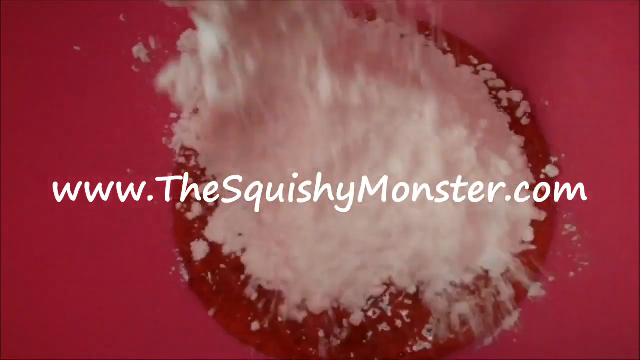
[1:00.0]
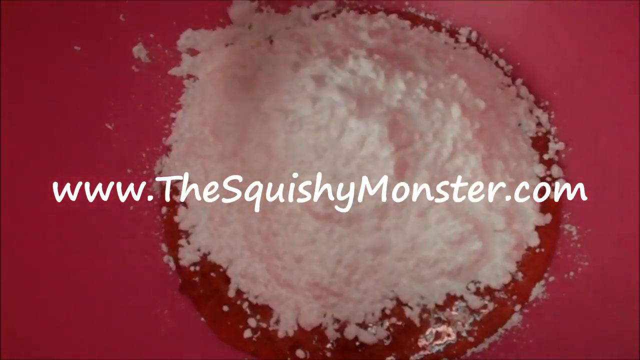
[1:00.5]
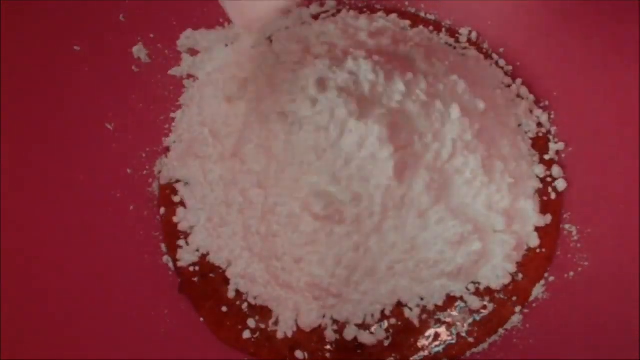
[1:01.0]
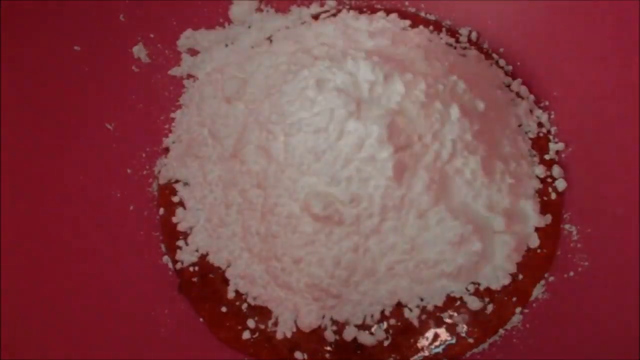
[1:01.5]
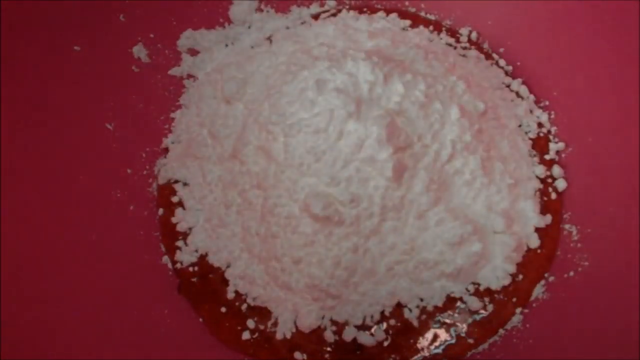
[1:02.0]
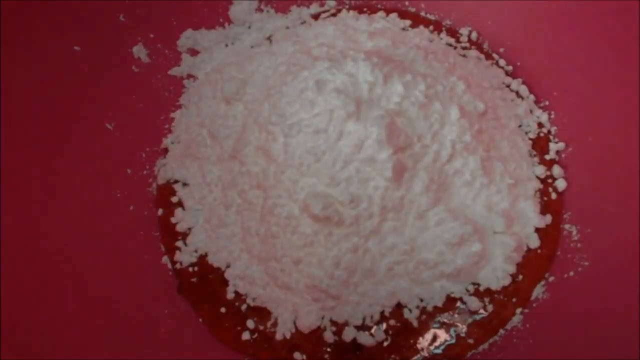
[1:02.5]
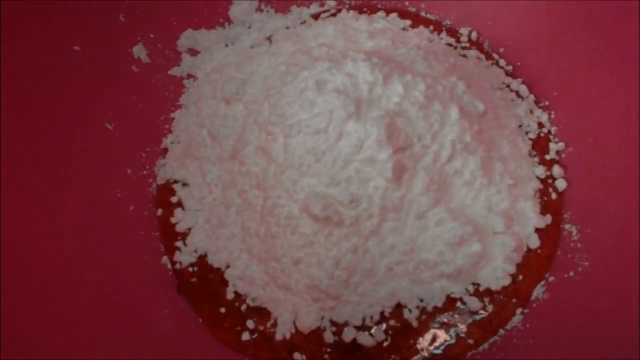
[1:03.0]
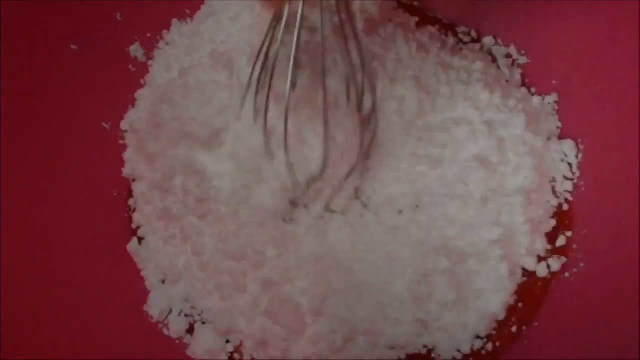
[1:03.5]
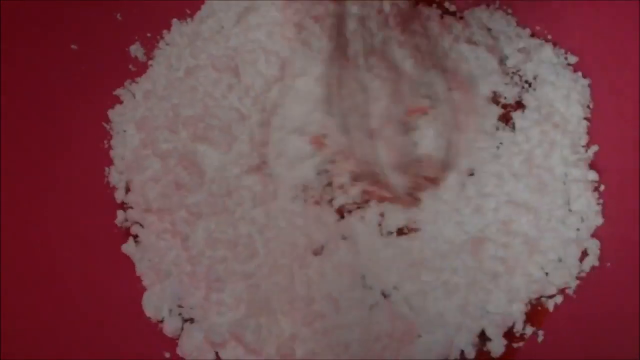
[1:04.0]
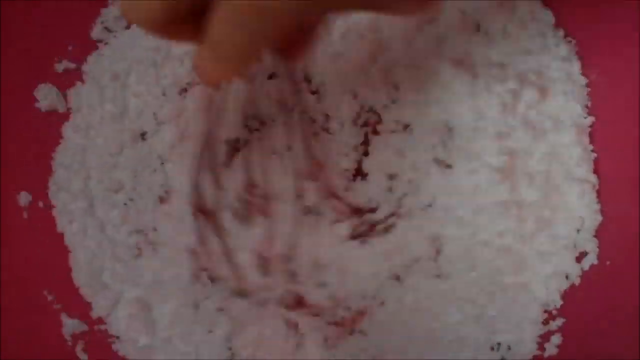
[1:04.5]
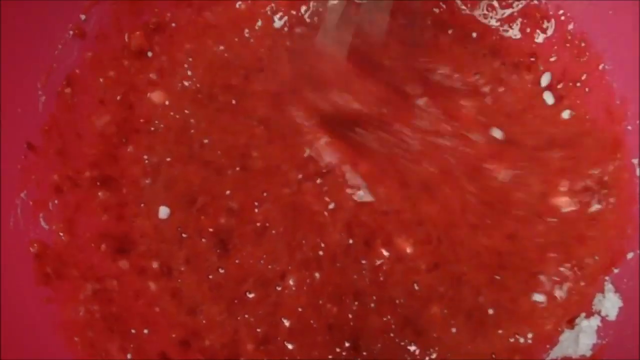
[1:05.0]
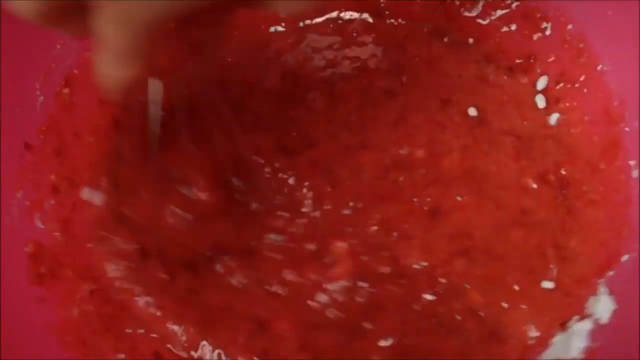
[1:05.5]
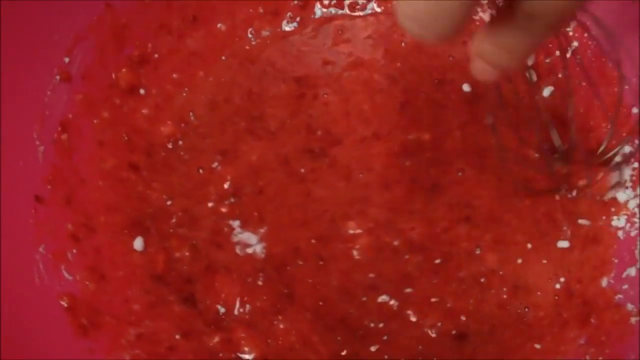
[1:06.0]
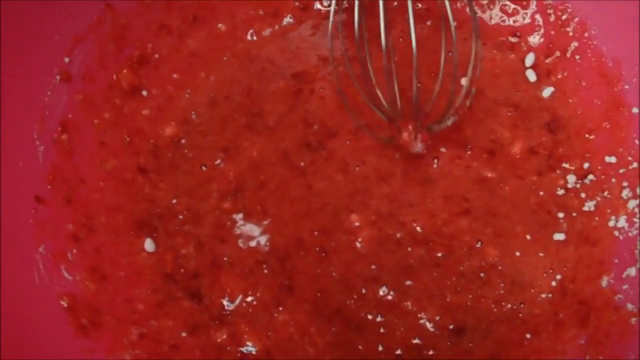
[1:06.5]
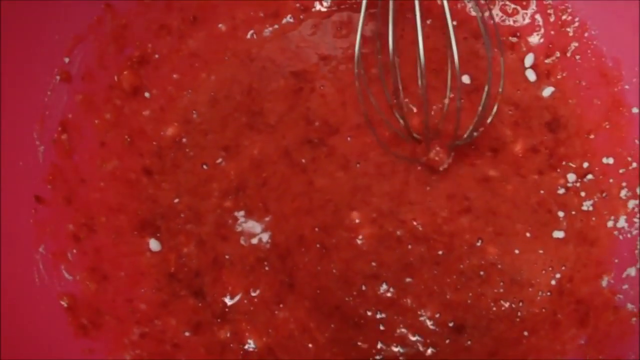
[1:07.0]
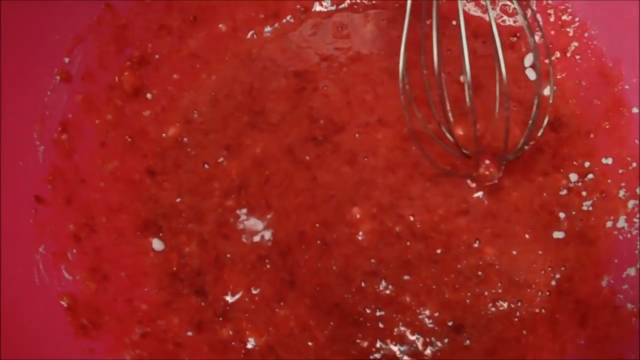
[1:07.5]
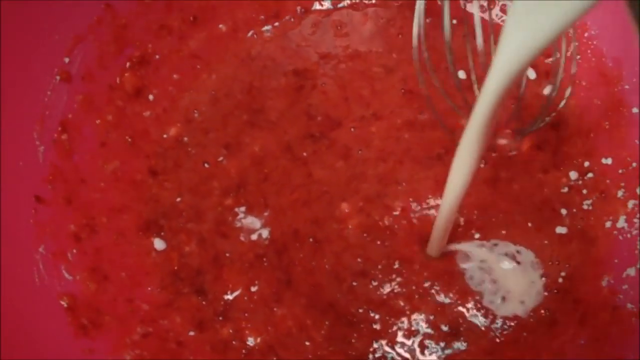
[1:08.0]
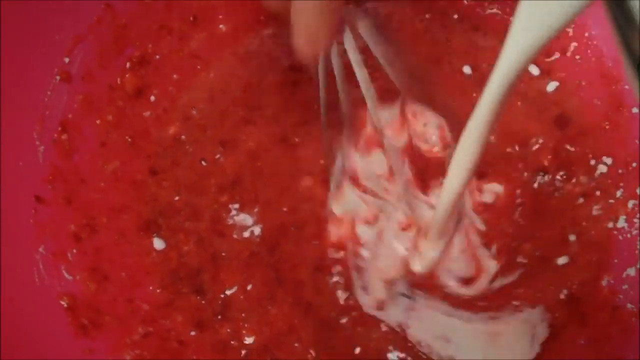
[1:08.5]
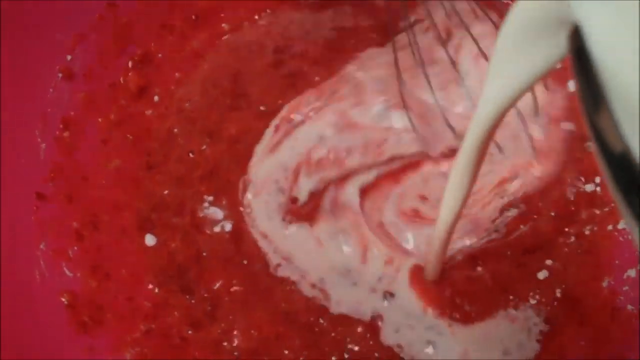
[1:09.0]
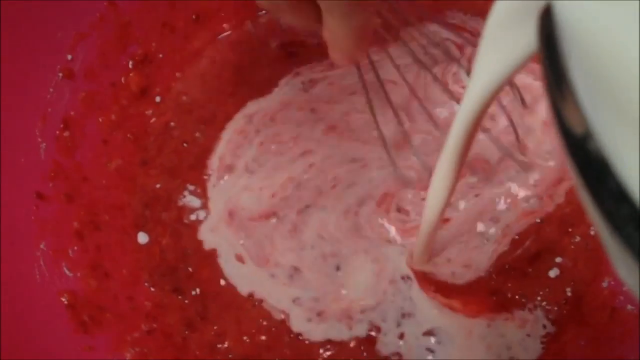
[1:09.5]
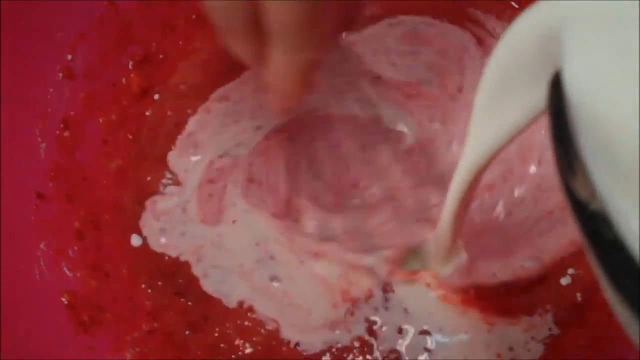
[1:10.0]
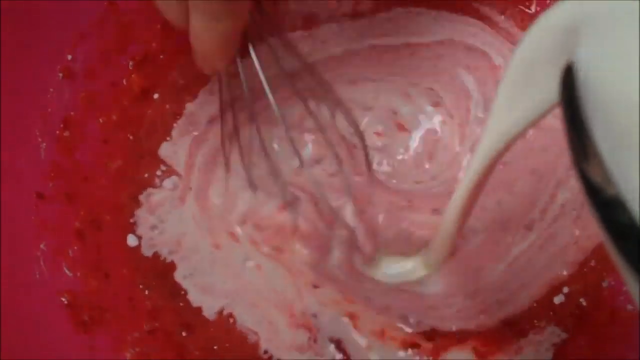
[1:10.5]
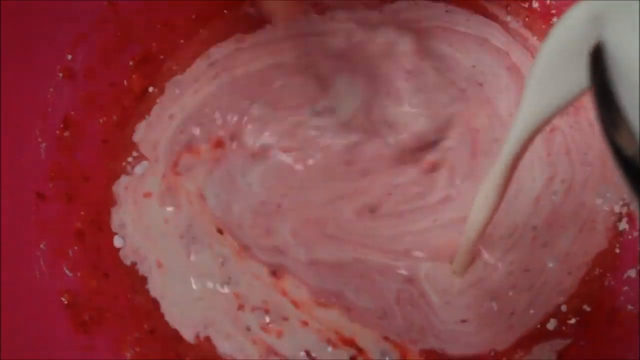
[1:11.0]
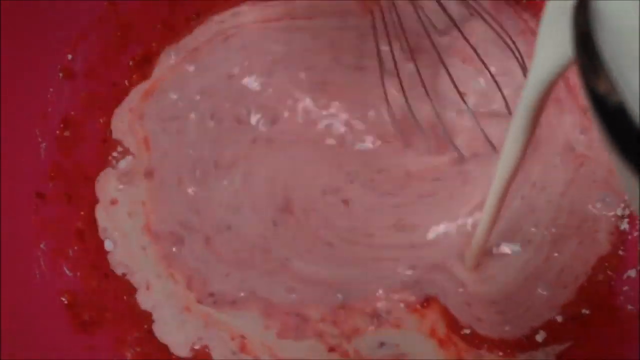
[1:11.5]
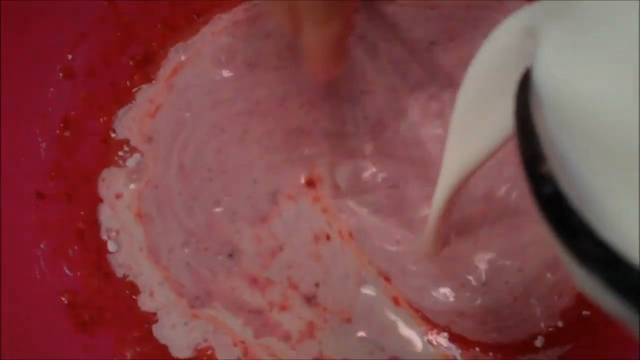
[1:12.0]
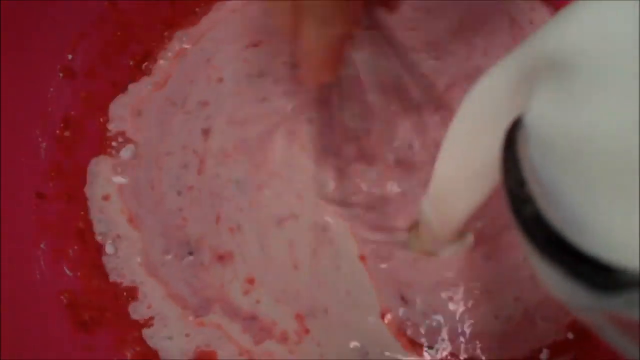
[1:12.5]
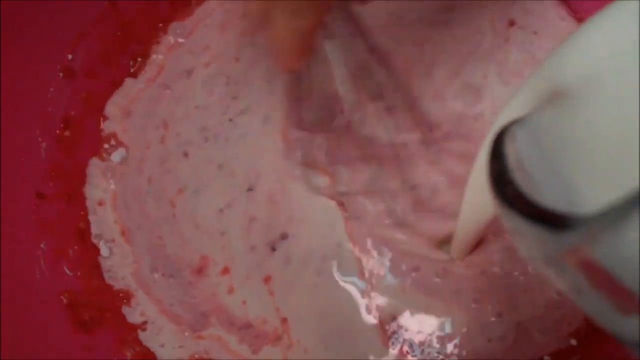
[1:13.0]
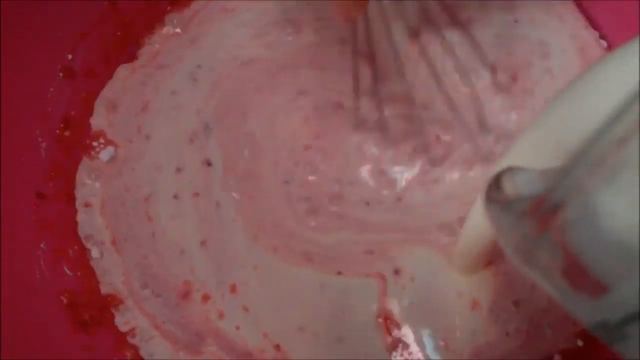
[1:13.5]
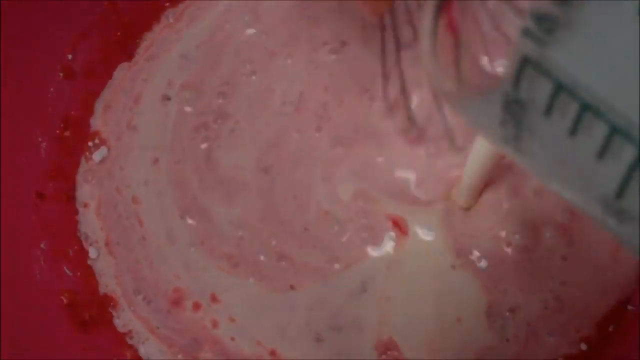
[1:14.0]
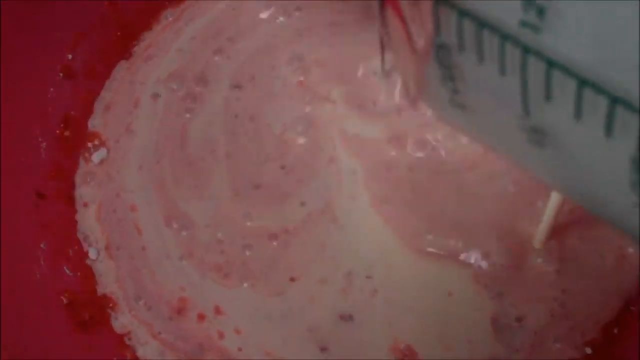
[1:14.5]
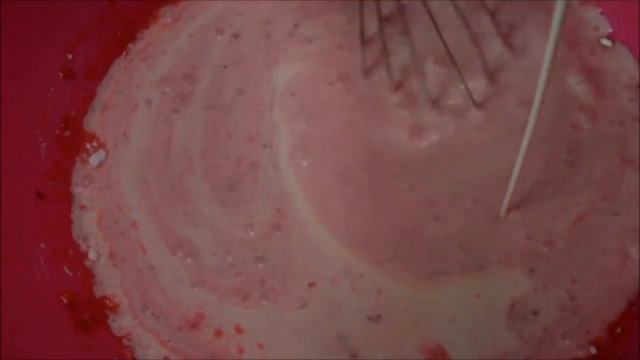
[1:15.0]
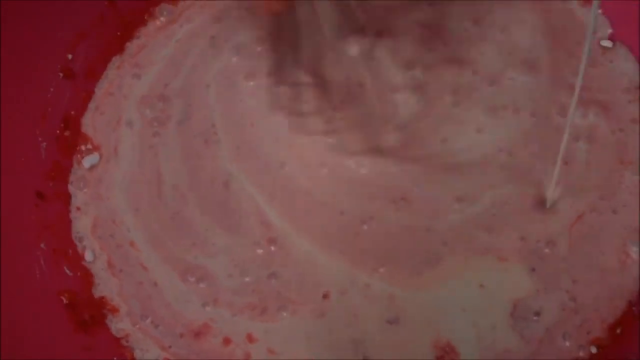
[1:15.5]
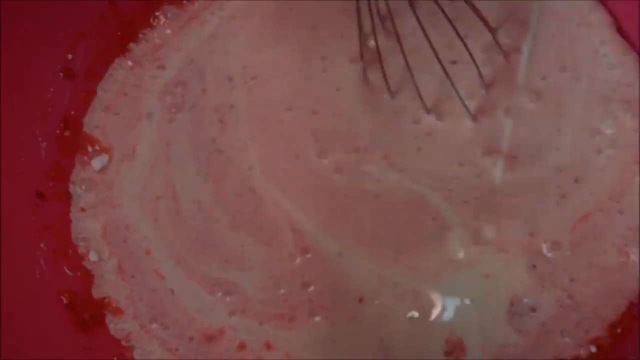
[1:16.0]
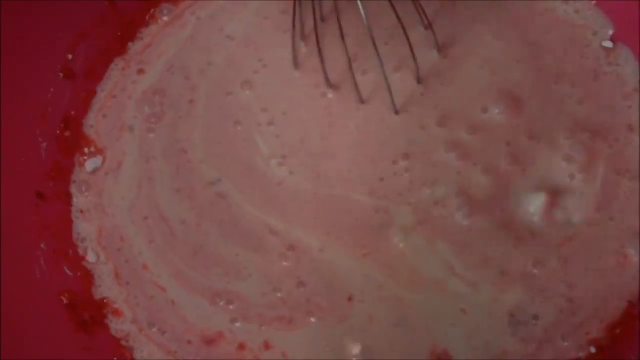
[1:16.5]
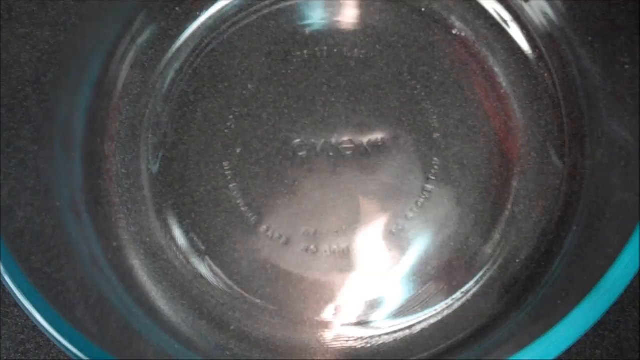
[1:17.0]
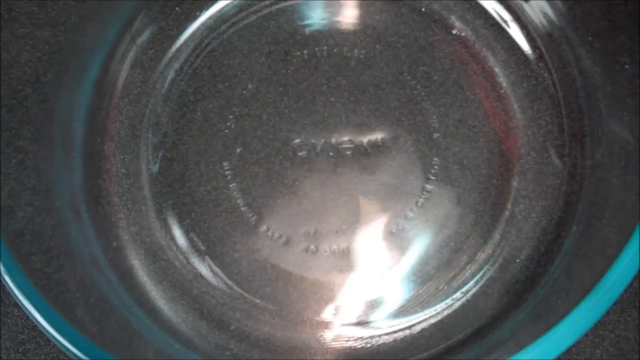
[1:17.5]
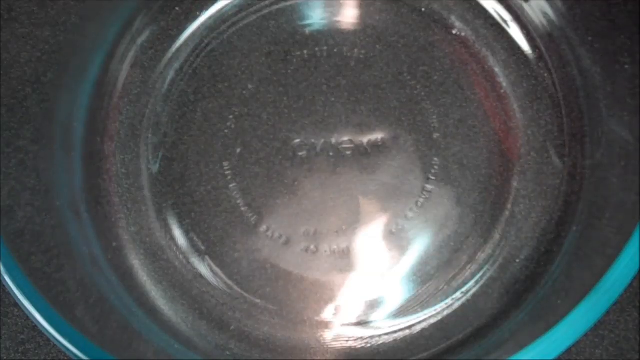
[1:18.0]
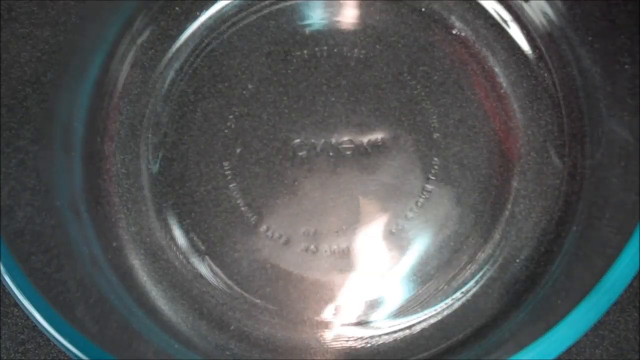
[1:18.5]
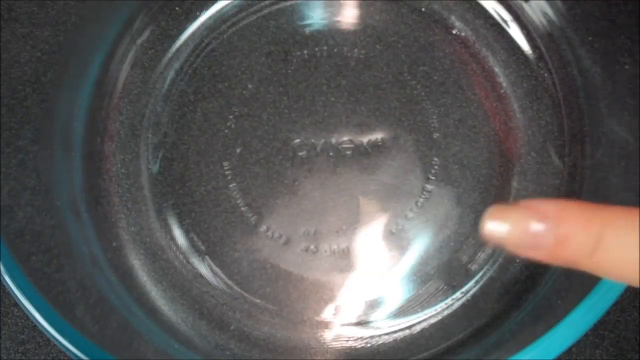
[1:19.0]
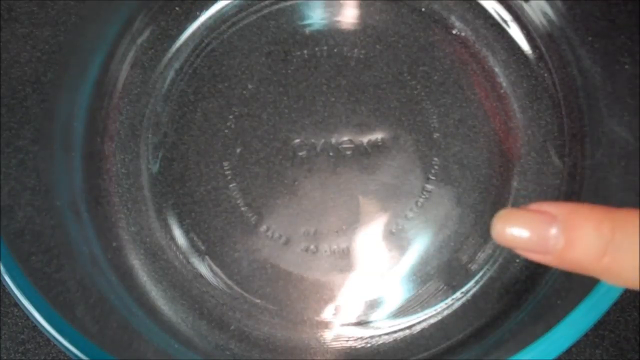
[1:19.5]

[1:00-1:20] Someone prepares a dish. The camera is focused on the contents of a large pink bowl, with a red puree in the bottom, and someone begins to pour a white powder on top of it. In the center of the screen, "www.TheSquishyMonster.com" is displayed at first and then disappears. Someone whisks the ingredients together with a metal whisk, and the video fast-forwards to show the ingredients completely combined. Someone pours white cream into the mix from a glass measuring cup and whisks again to incorporate the cream. The scene then changes, and the camera is focused on a clear glass Pyrex bowl. Someone's finger rests on the side of the bowl, as if pointing to it to indicate what they are about to do.